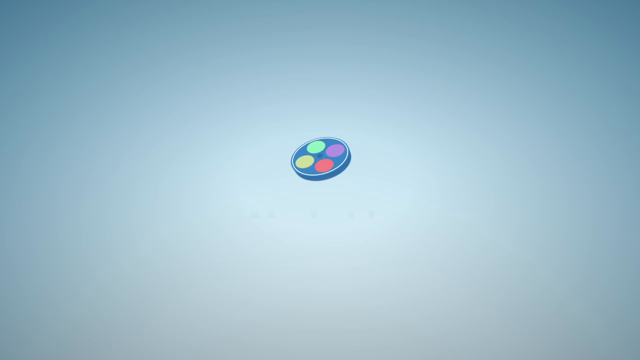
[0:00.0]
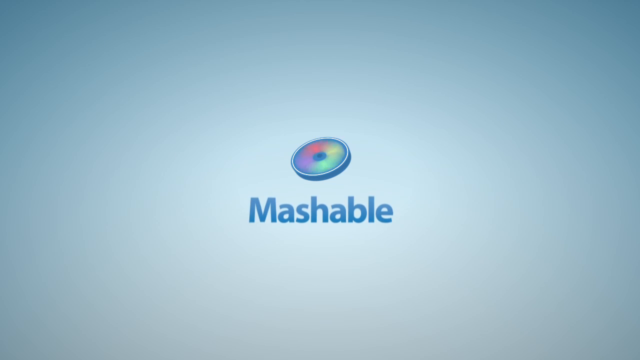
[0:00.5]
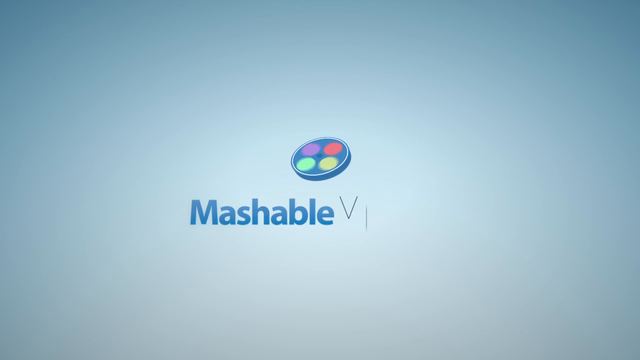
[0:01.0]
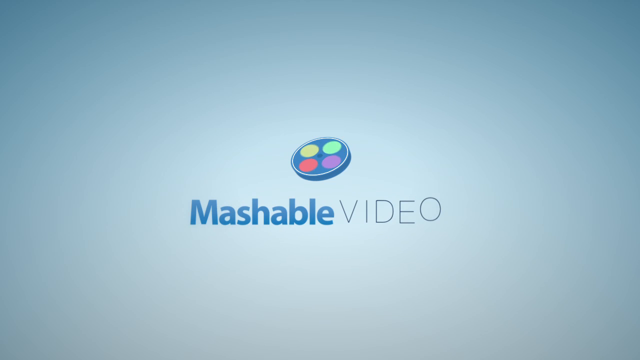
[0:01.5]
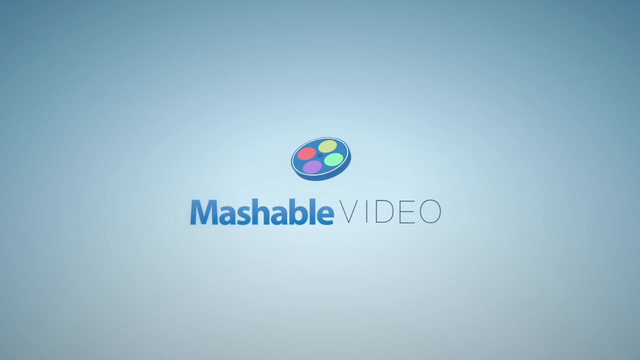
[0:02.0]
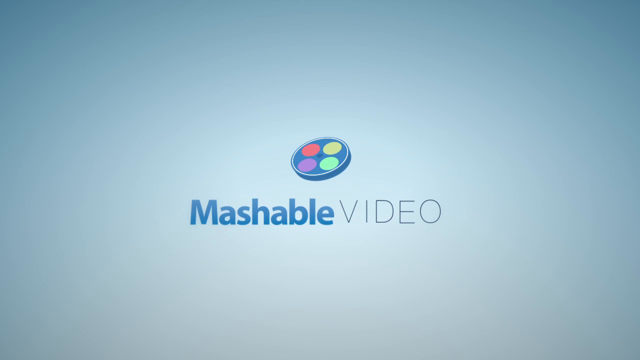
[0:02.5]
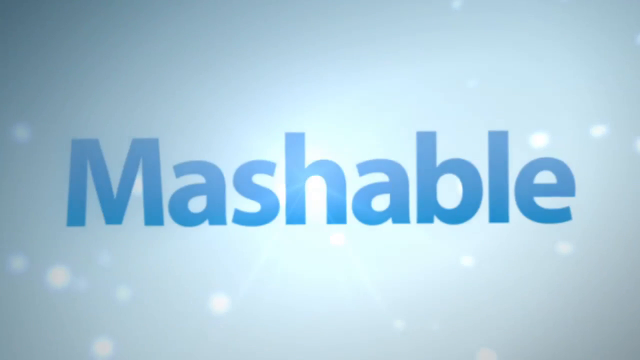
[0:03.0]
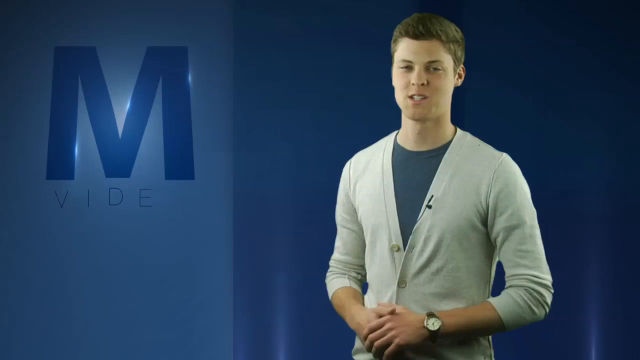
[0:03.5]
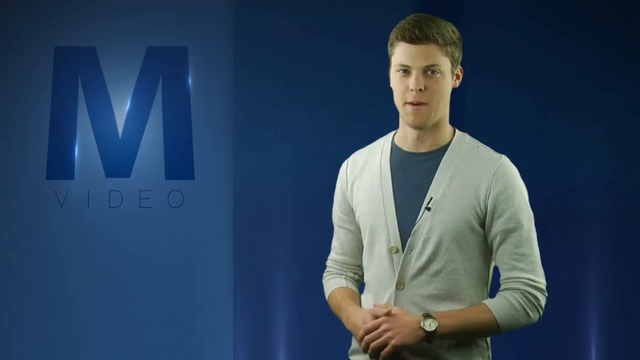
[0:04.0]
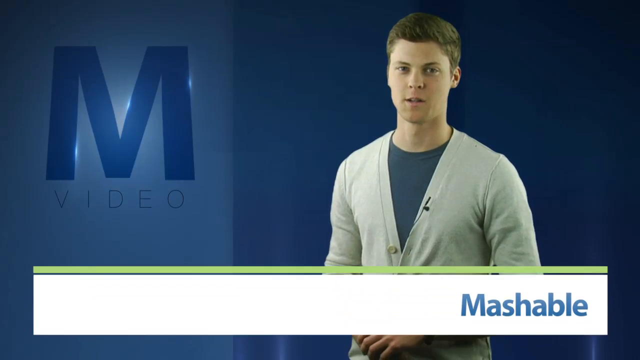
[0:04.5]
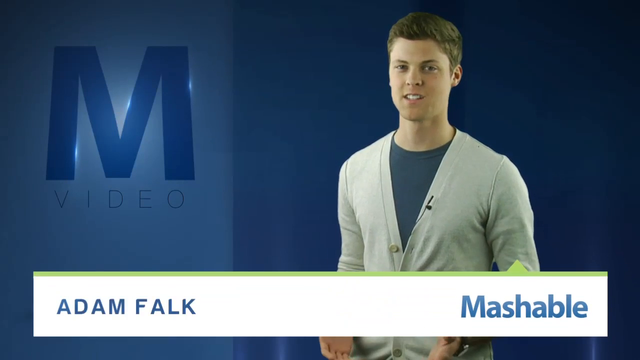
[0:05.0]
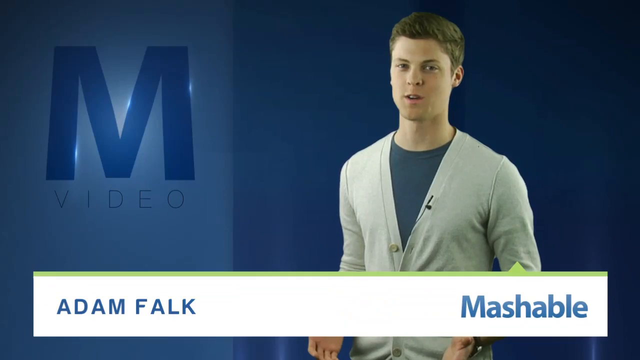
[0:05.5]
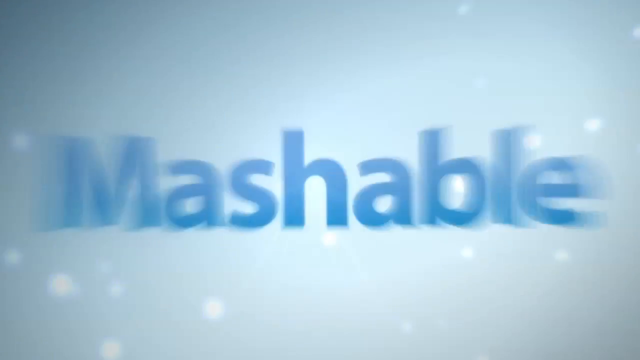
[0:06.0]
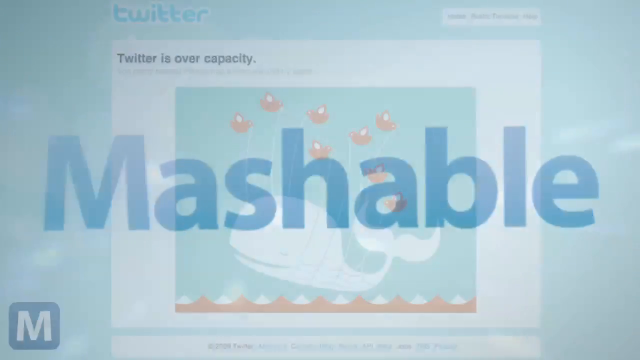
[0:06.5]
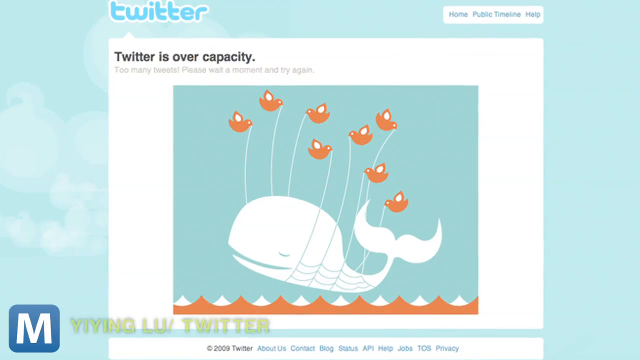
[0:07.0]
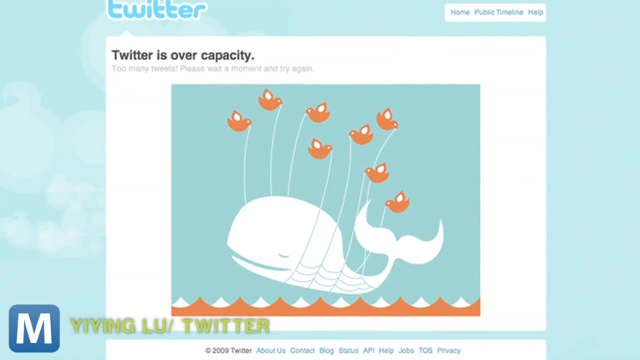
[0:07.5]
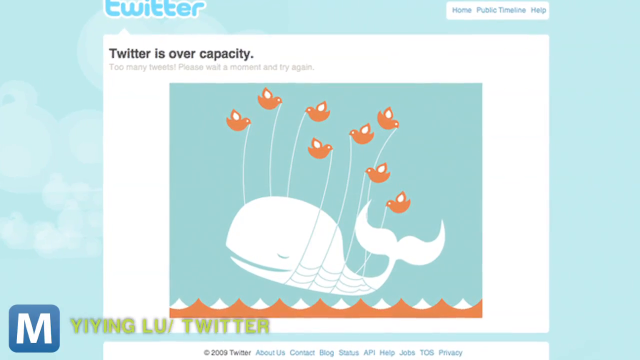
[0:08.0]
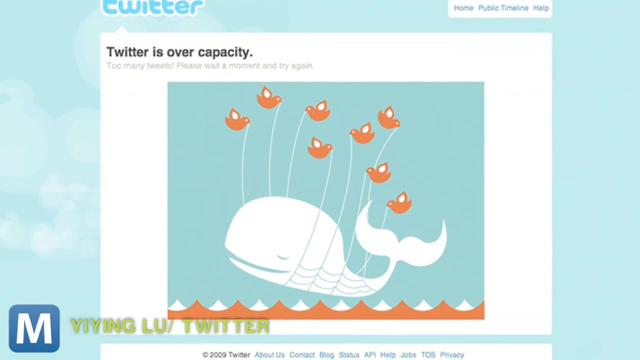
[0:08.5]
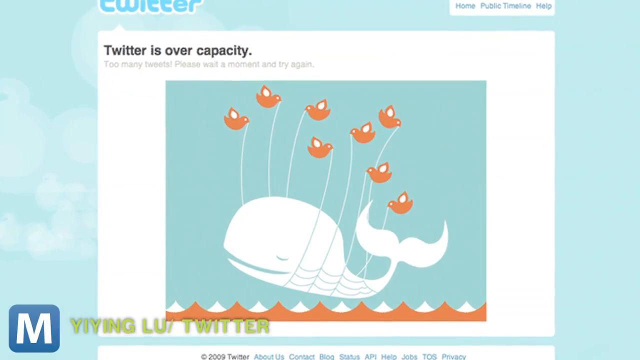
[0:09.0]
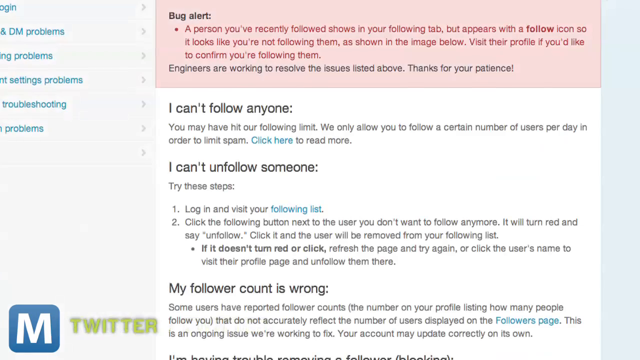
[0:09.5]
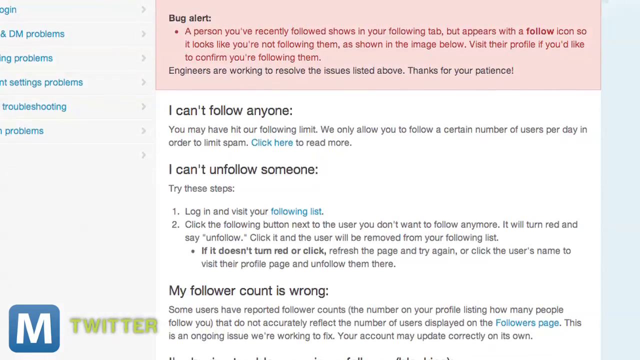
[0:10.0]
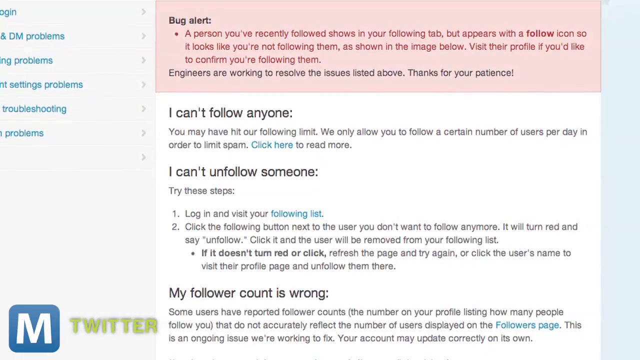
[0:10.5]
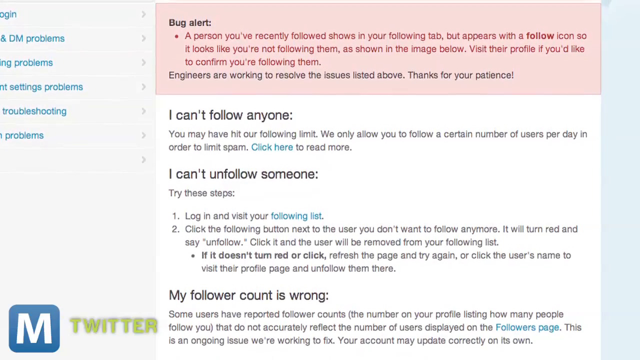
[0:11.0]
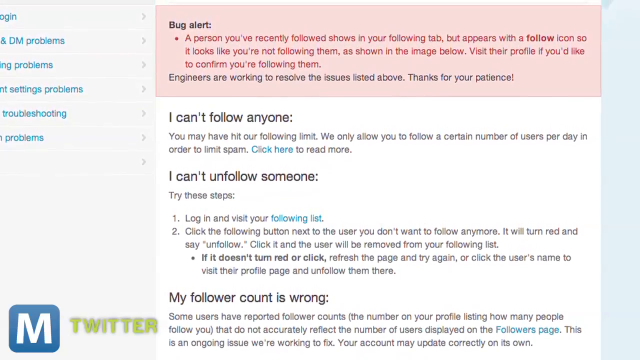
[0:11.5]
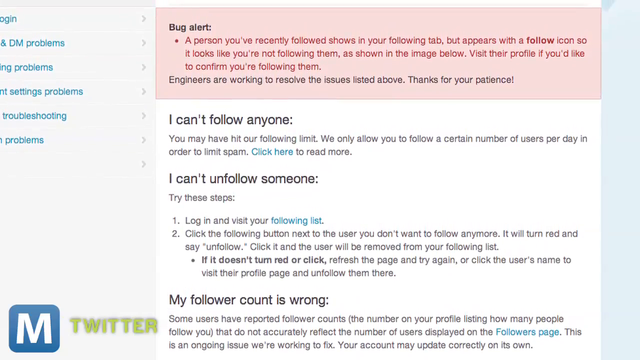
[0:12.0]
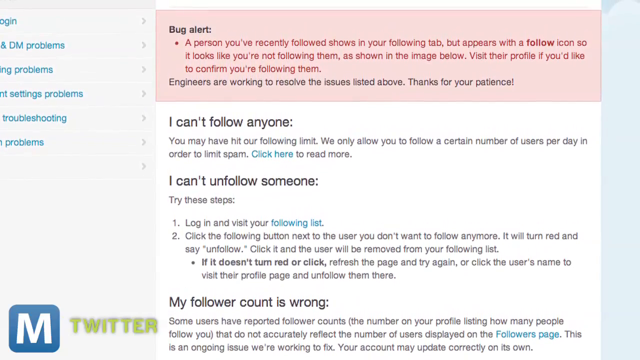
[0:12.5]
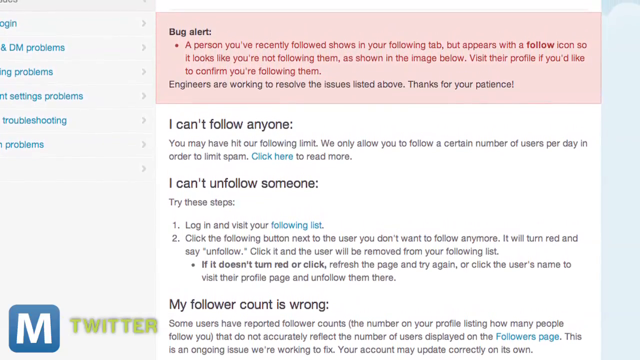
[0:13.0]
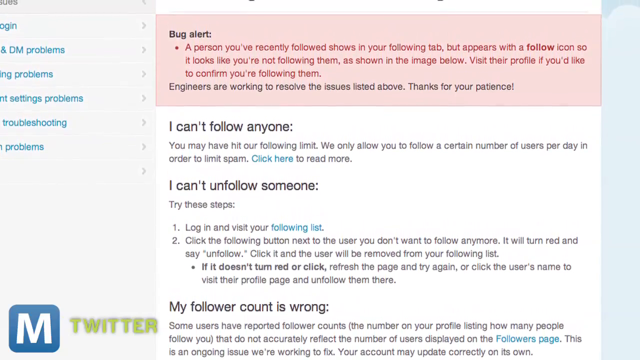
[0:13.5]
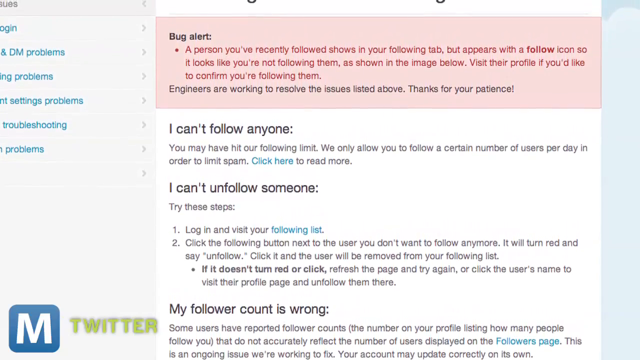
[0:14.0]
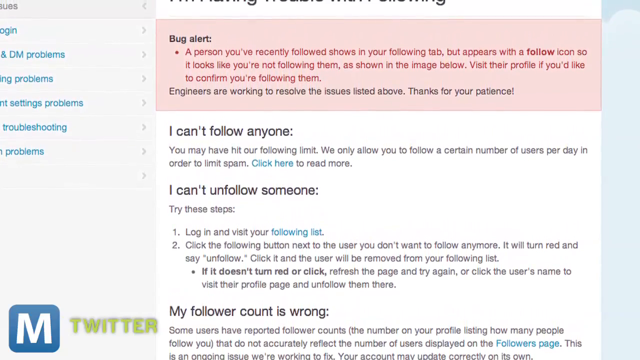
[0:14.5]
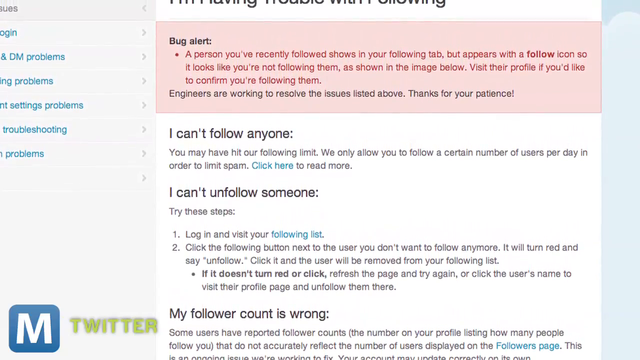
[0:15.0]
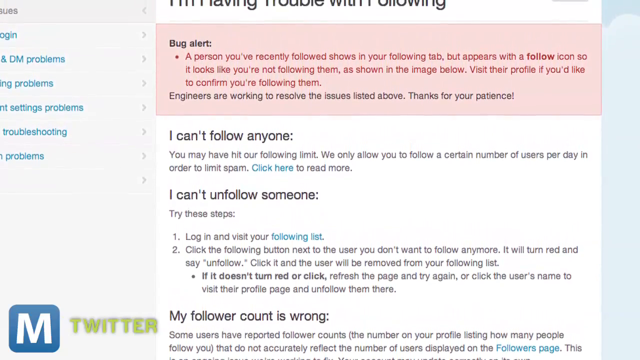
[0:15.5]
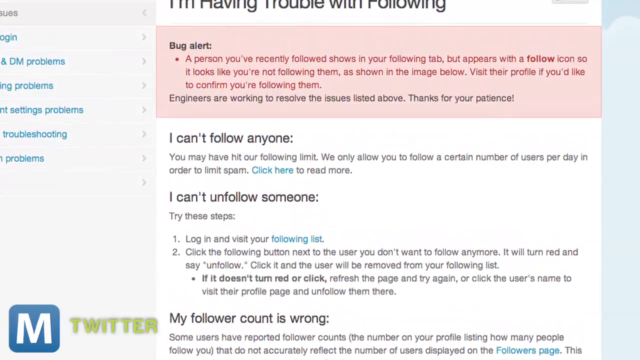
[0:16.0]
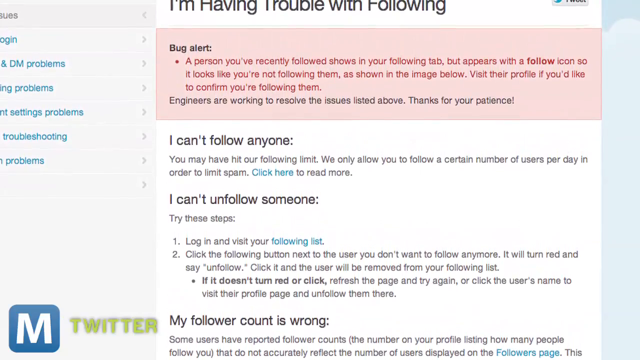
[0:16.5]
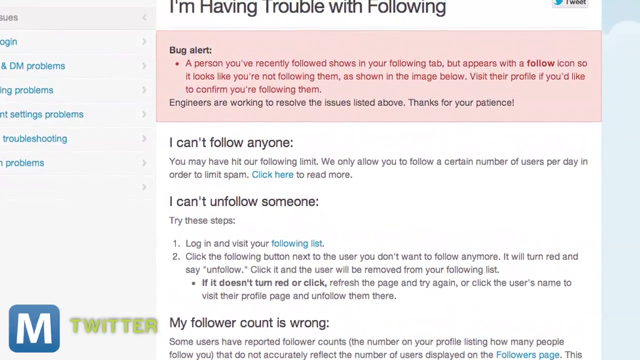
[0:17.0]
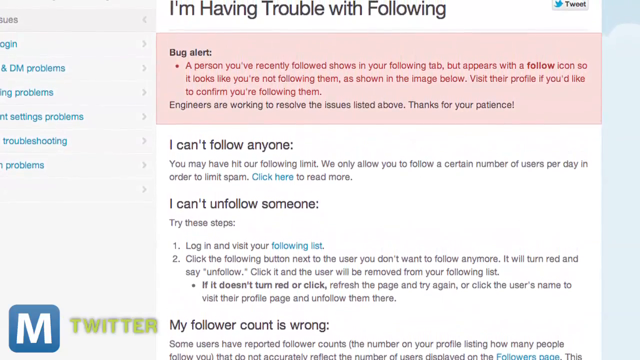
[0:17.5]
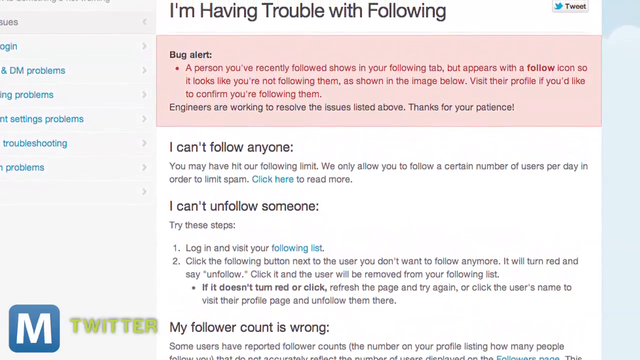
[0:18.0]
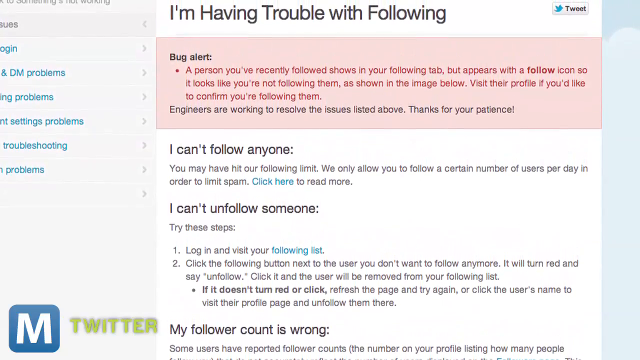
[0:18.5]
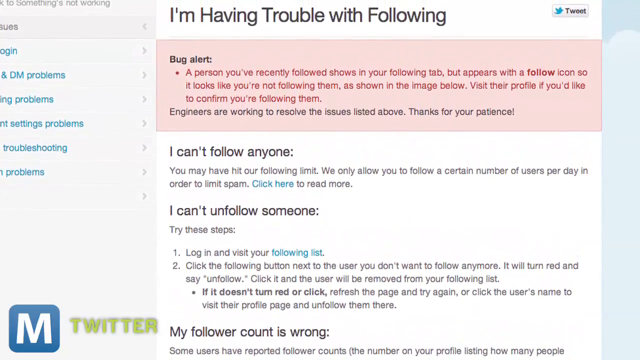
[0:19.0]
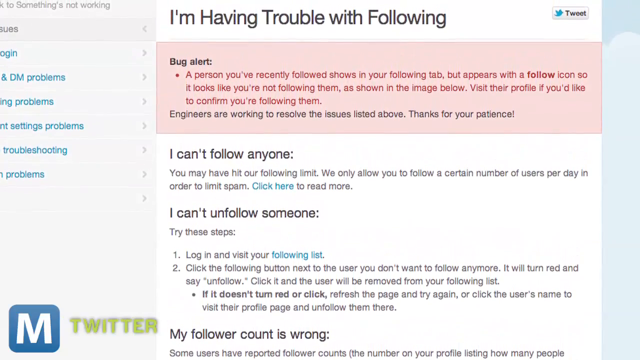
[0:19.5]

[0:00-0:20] The video is from Mashable and concerns Twitter and Adam Falk. He says that a person you've recently followed shows in your following tab but appears with a follow icon, so it looks like you are not following them, and that you can visit their profile to confirm you are following them. Text on screen then reads "I can't follow anyone", "you may have hit our following limit, we only allow you to follow a certain number of users per day", and "I can't unfollow someone", followed by steps: "log in and visit your following list", "the user will be removed from the following list", "refresh the page and try again", and "click the username to visit their profile page and unfollow them".